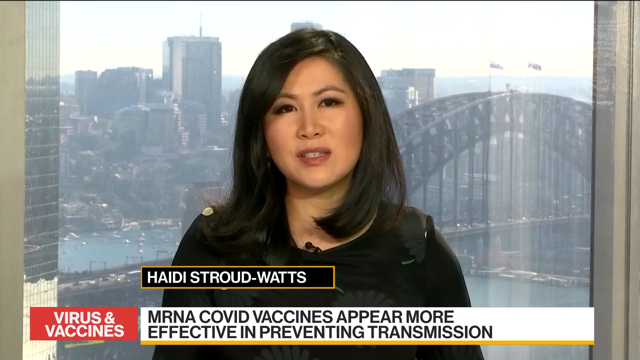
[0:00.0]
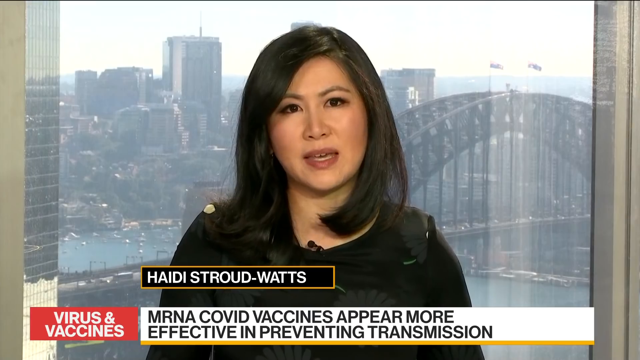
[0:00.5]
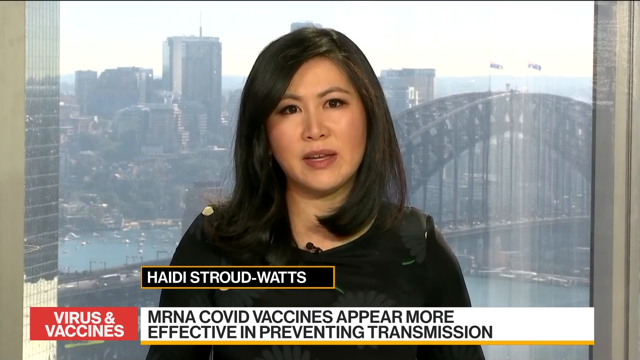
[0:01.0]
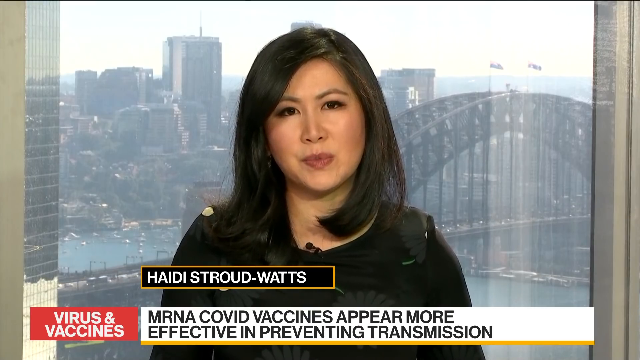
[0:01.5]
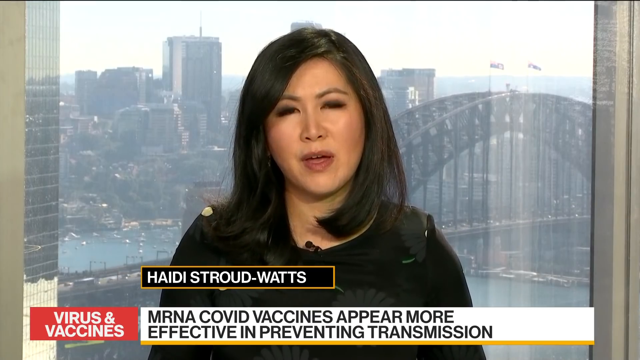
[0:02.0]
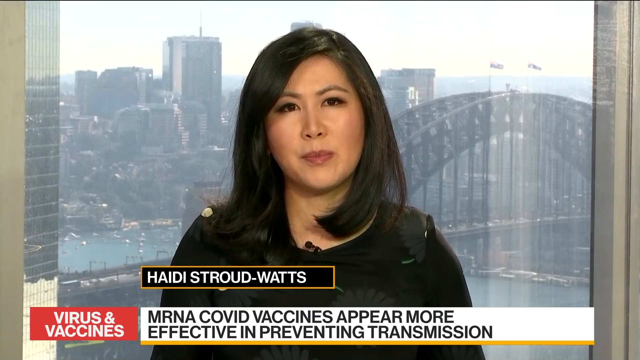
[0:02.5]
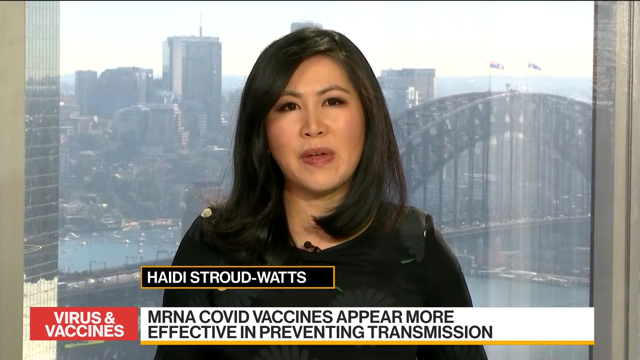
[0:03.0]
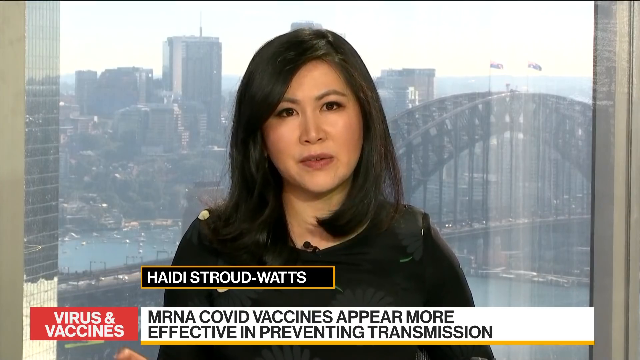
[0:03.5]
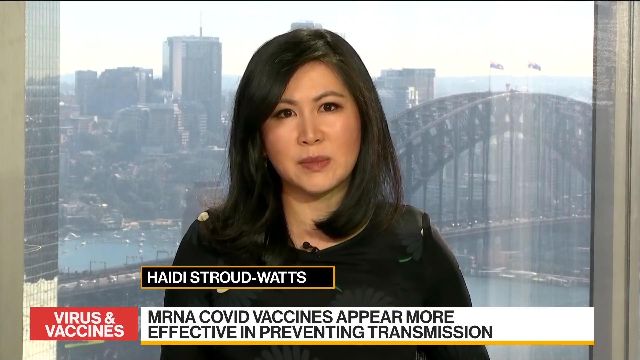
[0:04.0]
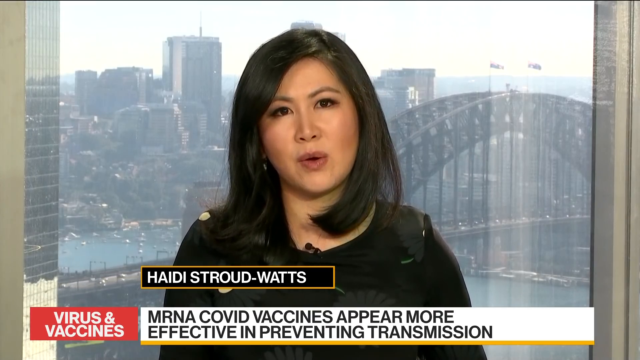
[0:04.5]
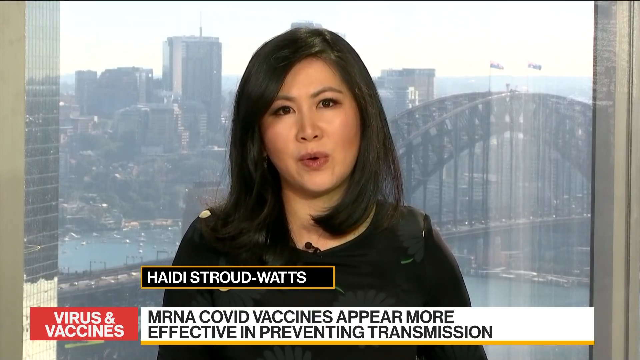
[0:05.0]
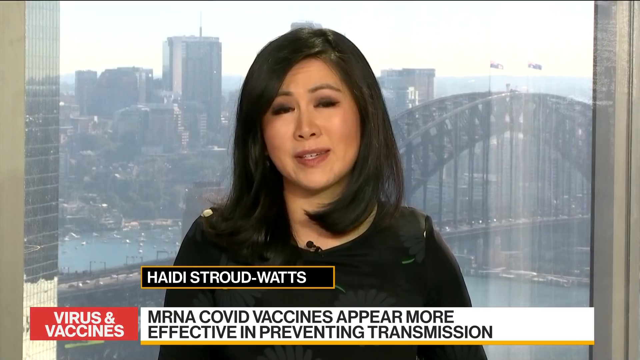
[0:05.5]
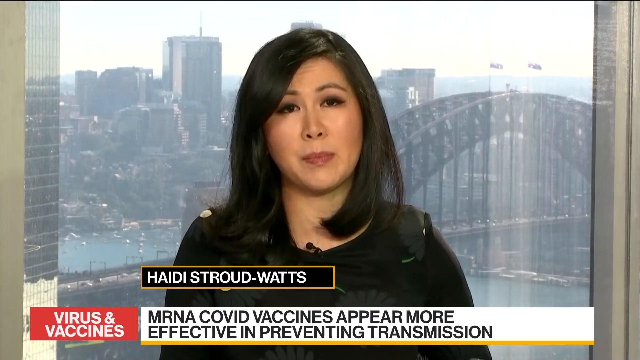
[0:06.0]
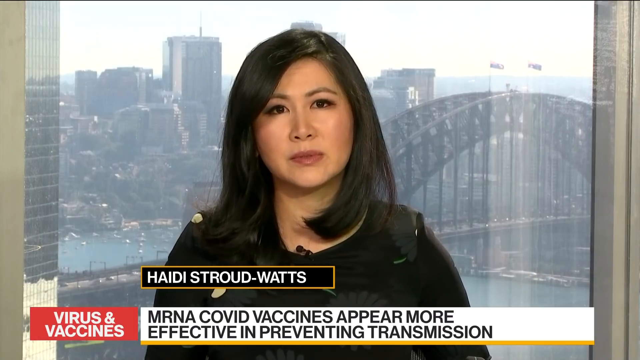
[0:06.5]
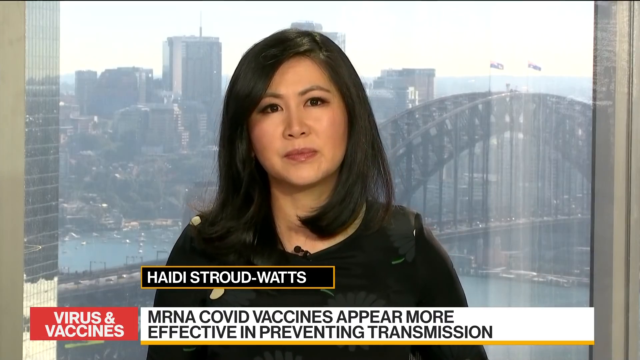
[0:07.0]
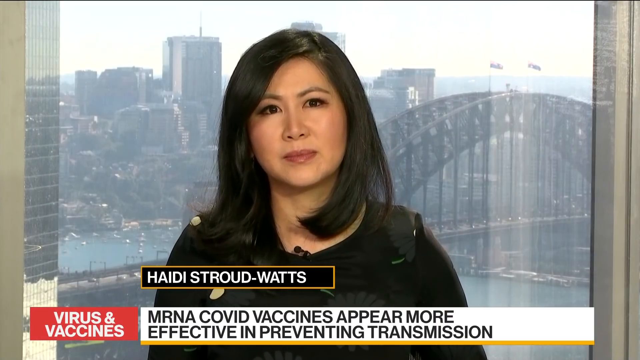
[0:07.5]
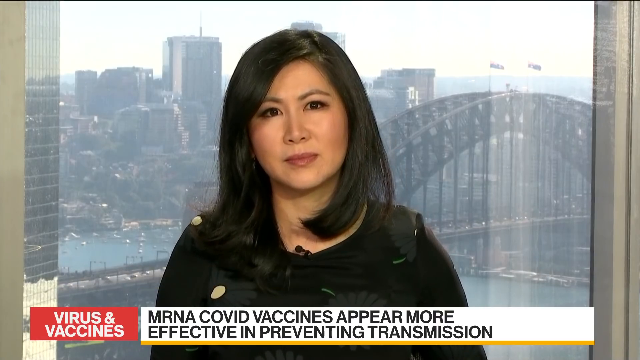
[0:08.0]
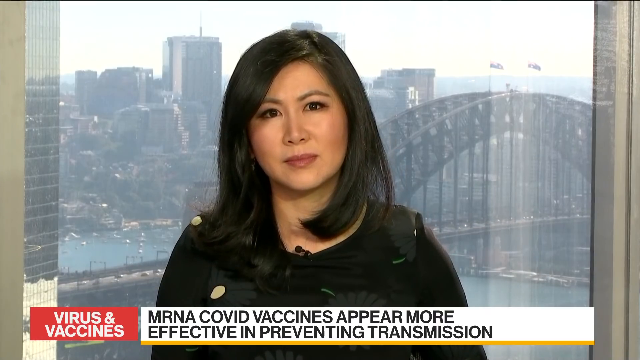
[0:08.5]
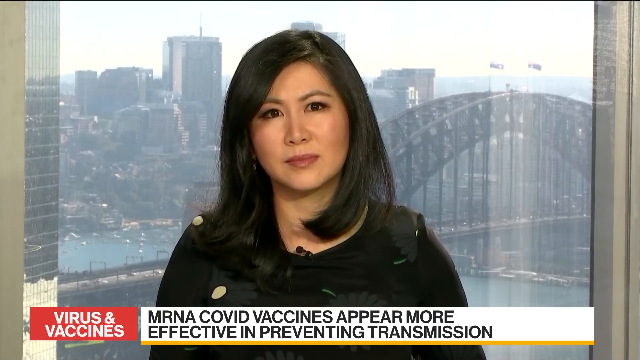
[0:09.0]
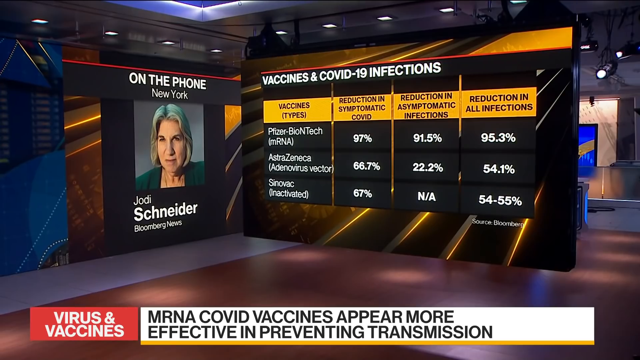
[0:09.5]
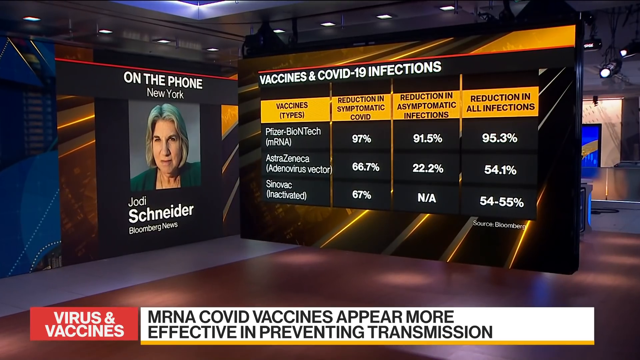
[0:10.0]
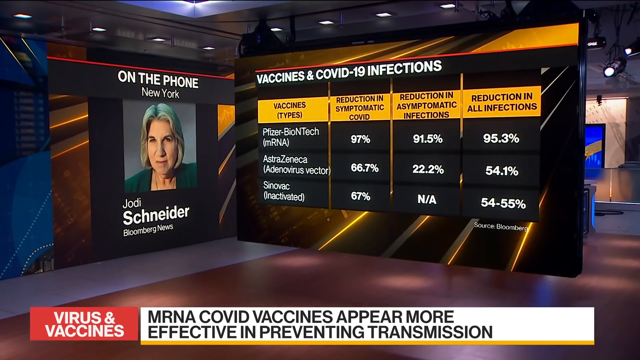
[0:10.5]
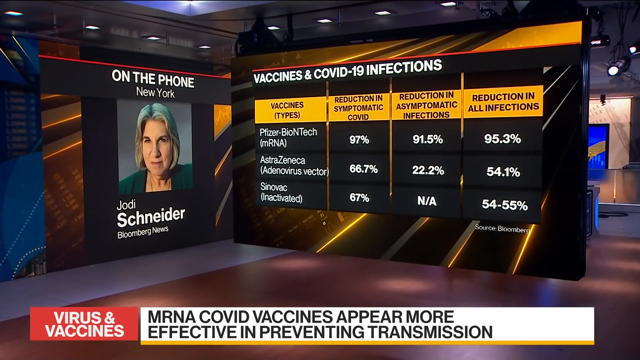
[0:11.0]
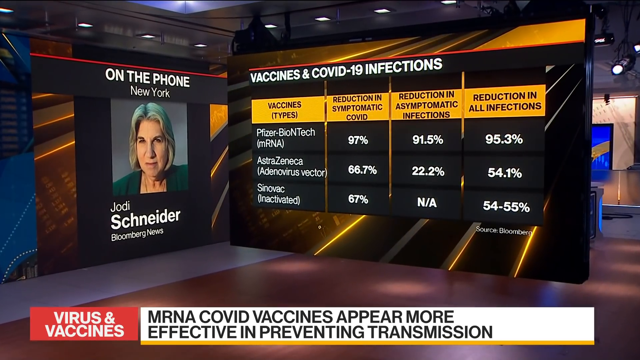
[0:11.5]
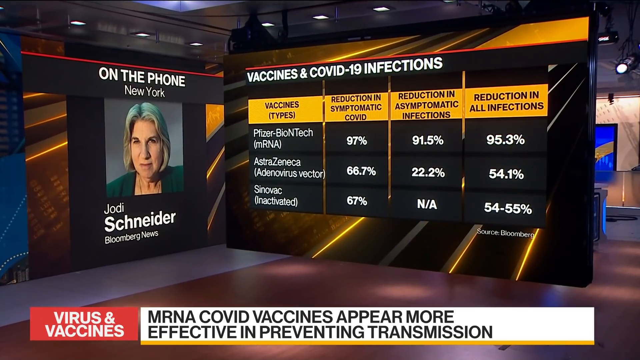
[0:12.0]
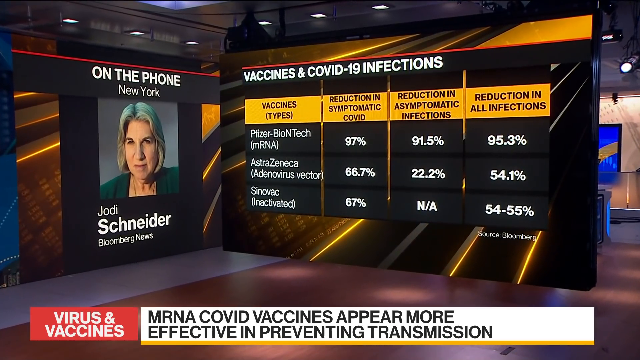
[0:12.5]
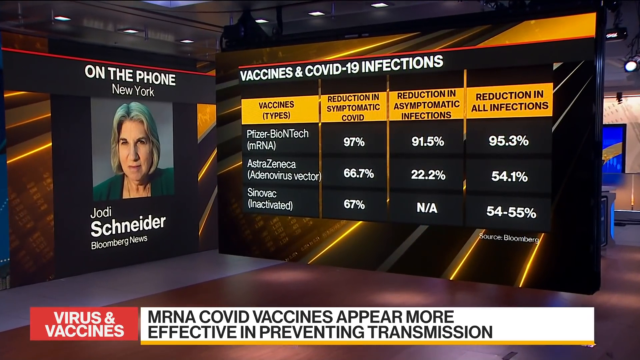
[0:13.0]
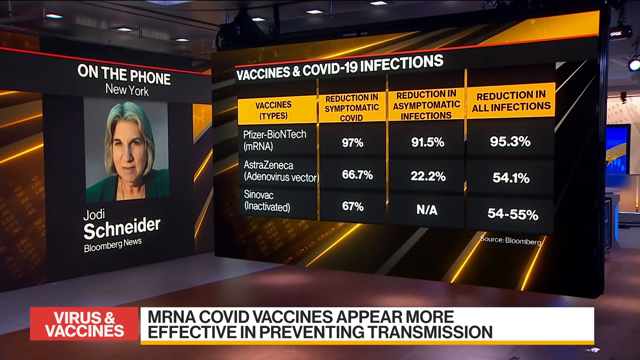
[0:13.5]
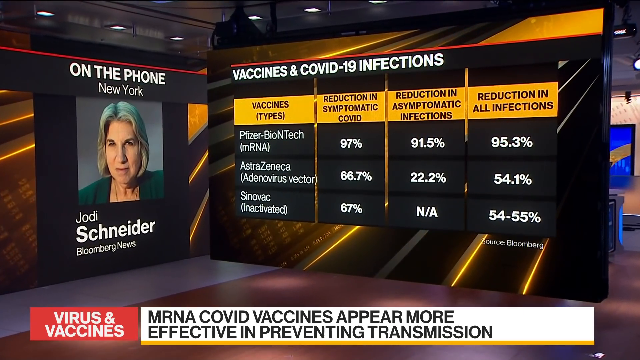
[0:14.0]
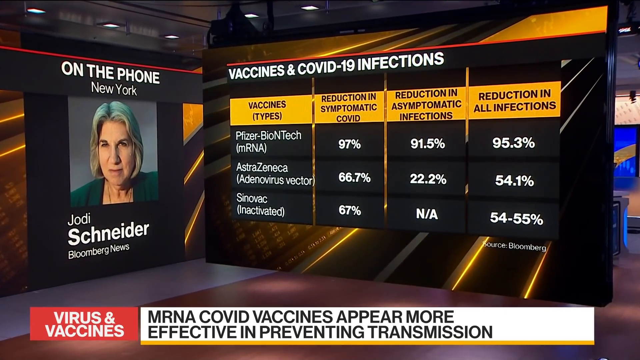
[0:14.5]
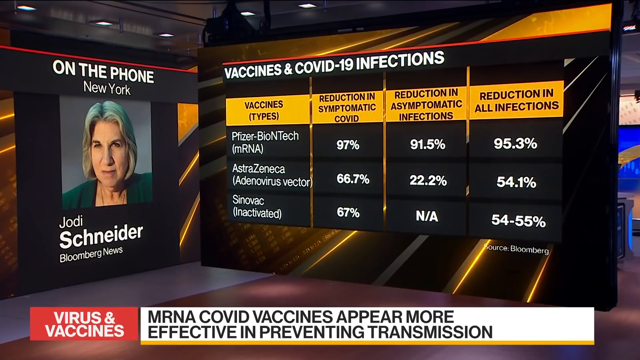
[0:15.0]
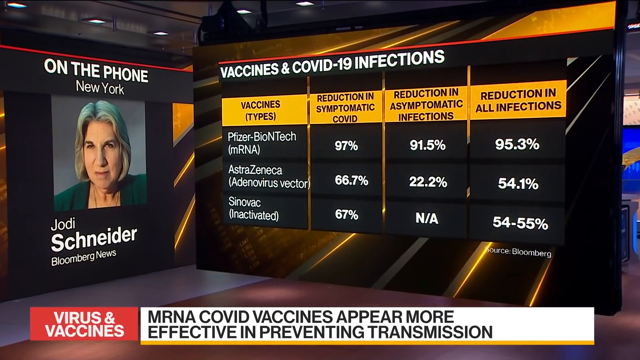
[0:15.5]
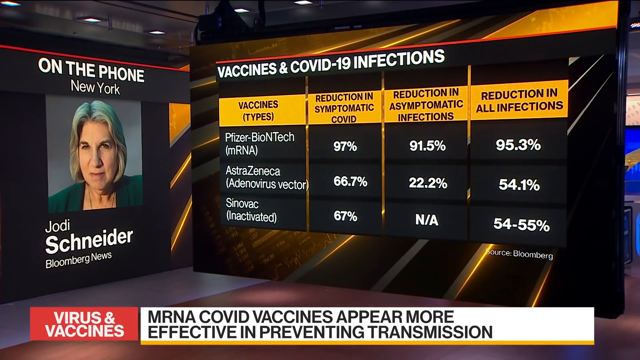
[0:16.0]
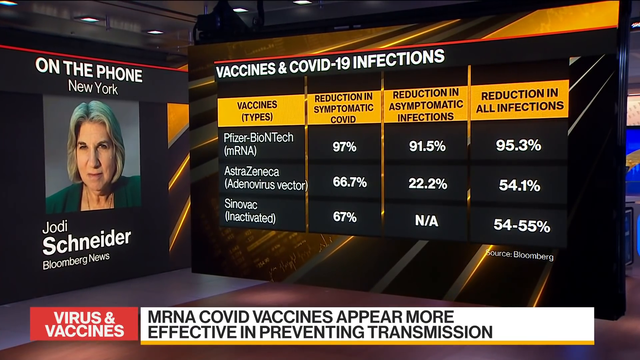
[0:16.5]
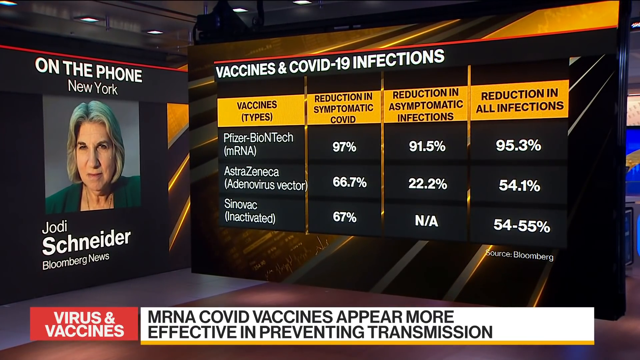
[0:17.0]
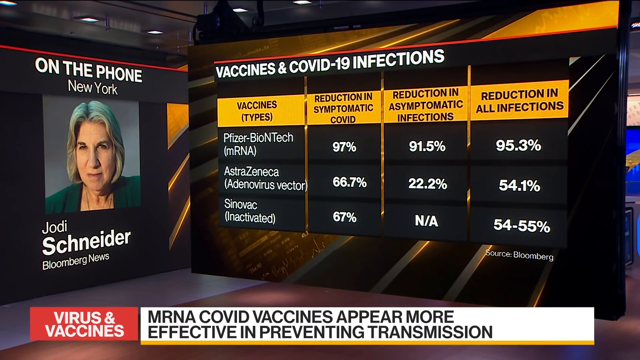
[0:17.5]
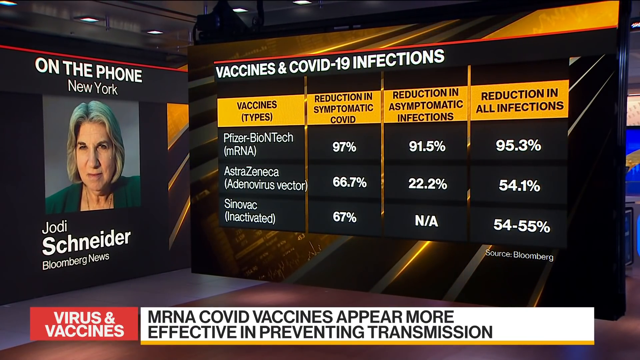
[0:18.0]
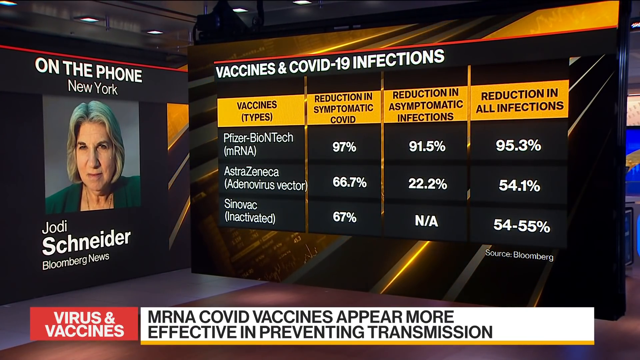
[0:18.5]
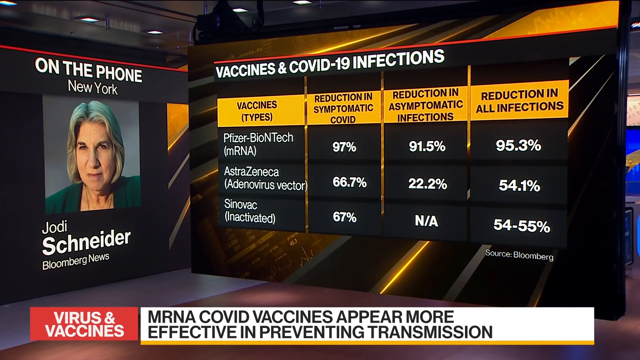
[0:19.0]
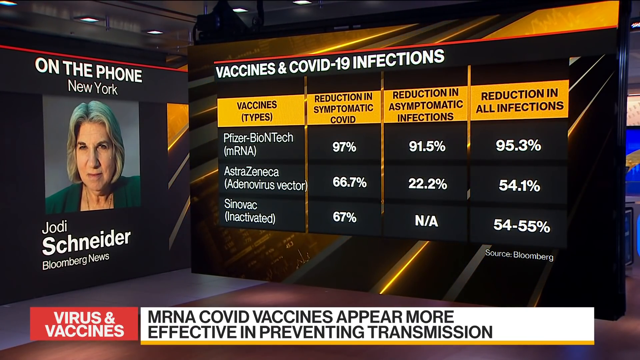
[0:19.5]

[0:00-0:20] A news report features a reporter whose last name is Watts, spelled W-A-T-T-S. She looks like a brunette Asian woman, and behind her are a city and a bridge. It is daylight, and the sun is visible outside. The broadcast then connects by phone with a woman from New York, Jody from Bloomberg News. On-screen text reads "vaccines and COVID-19 infections," and the figures show Pfizer as 97% effective in reducing symptomatic COVID and 95% overall, while two other vaccines are at 55% and lower. The setting appears to be a newsroom.